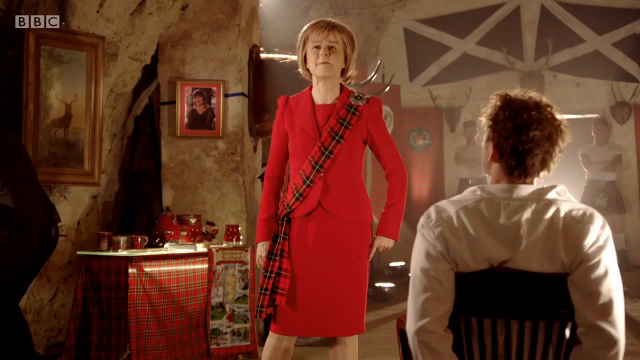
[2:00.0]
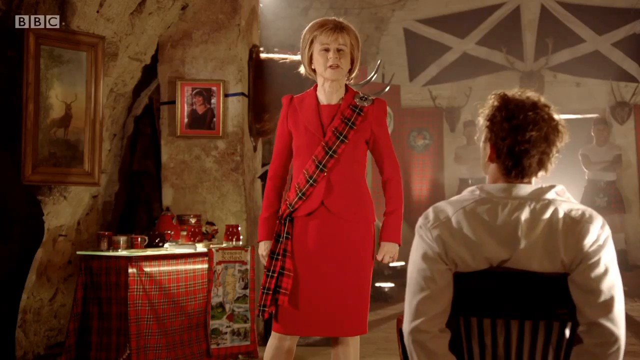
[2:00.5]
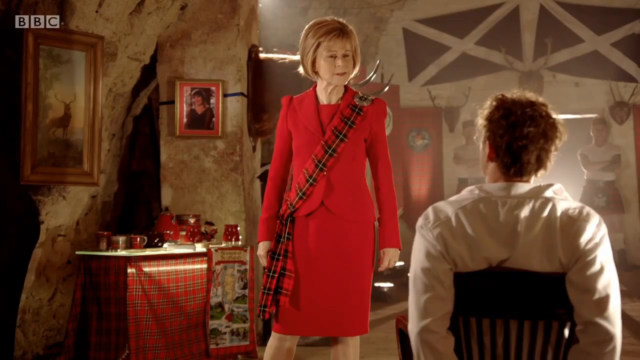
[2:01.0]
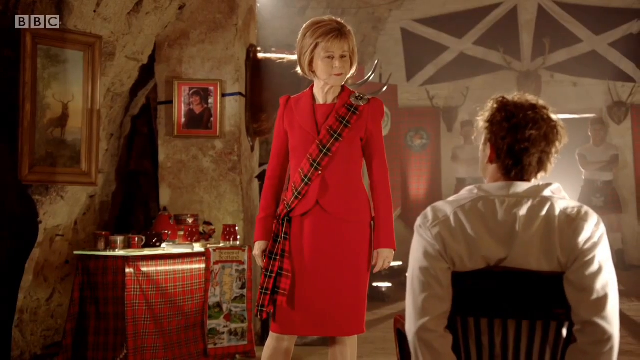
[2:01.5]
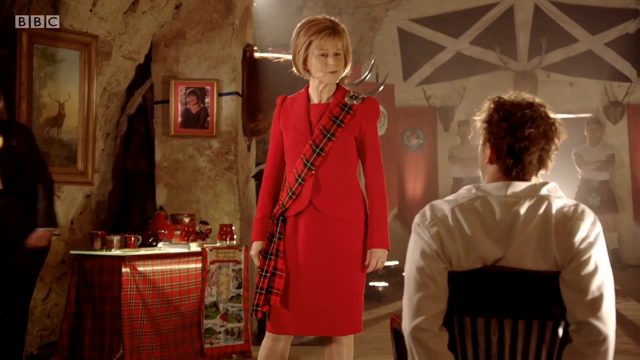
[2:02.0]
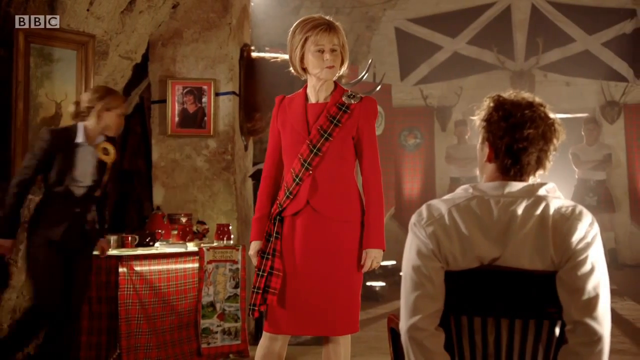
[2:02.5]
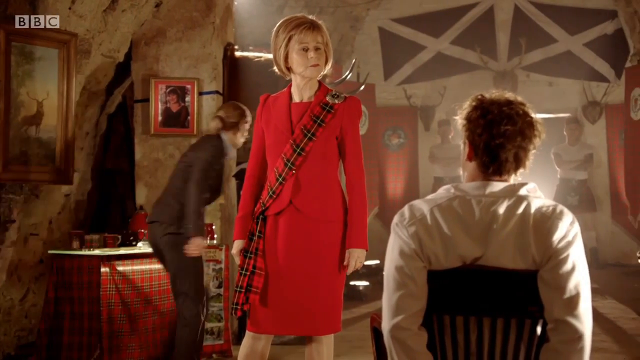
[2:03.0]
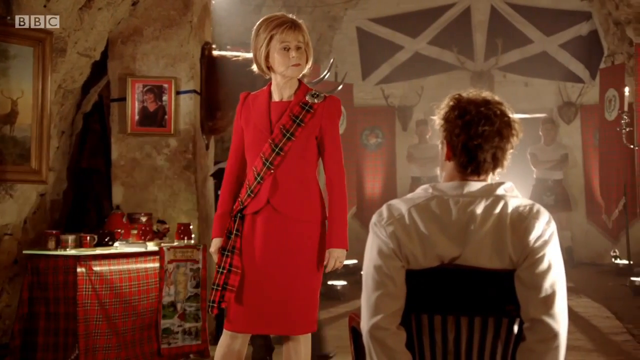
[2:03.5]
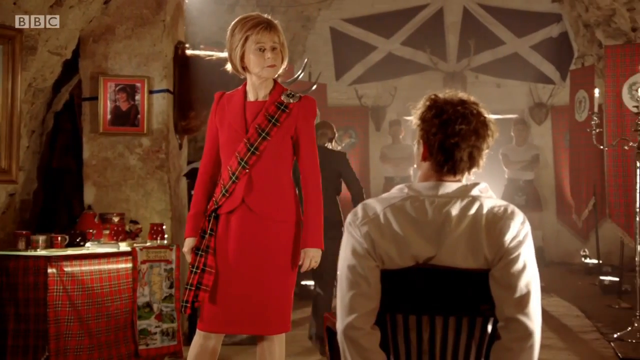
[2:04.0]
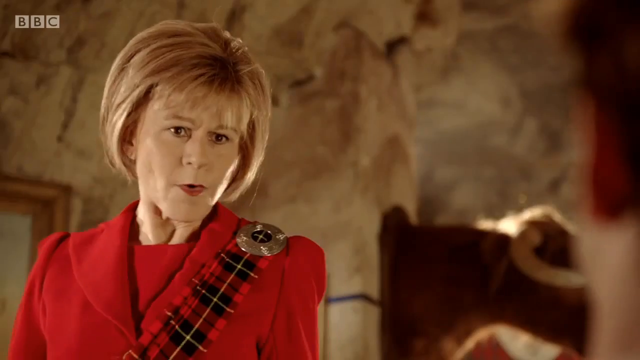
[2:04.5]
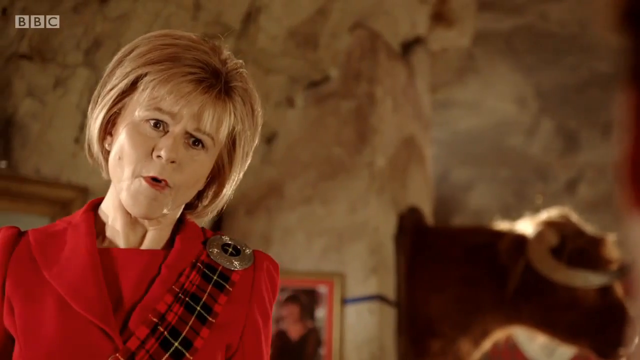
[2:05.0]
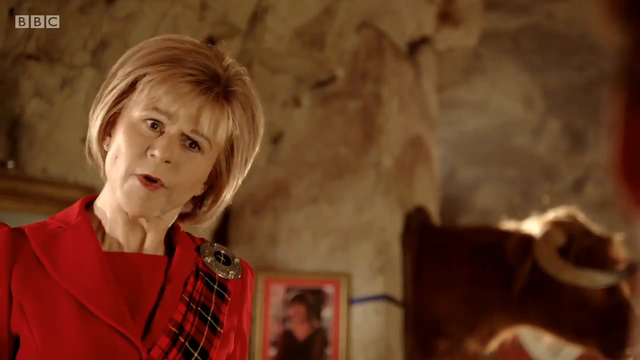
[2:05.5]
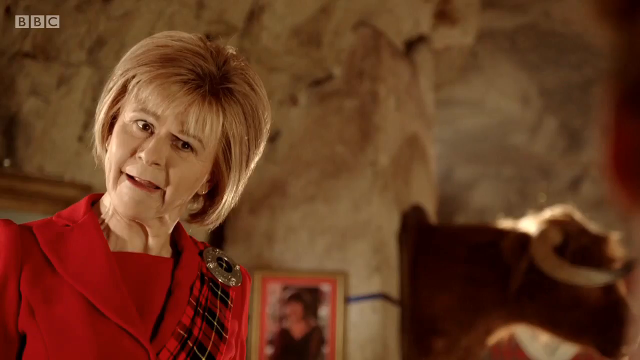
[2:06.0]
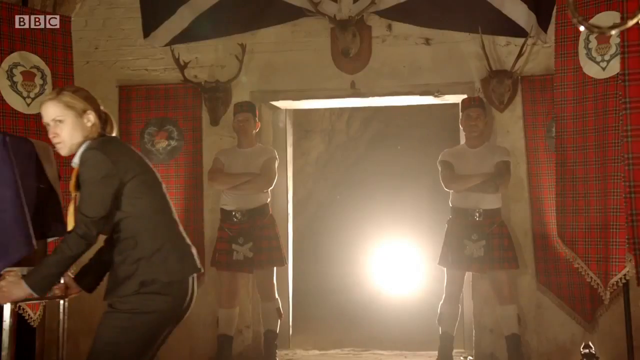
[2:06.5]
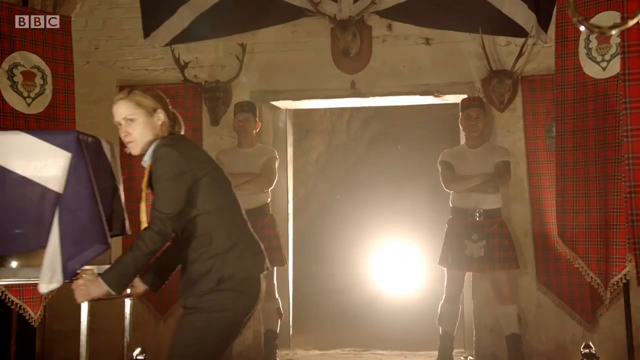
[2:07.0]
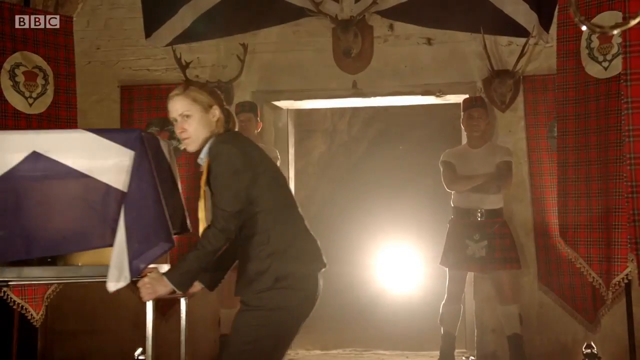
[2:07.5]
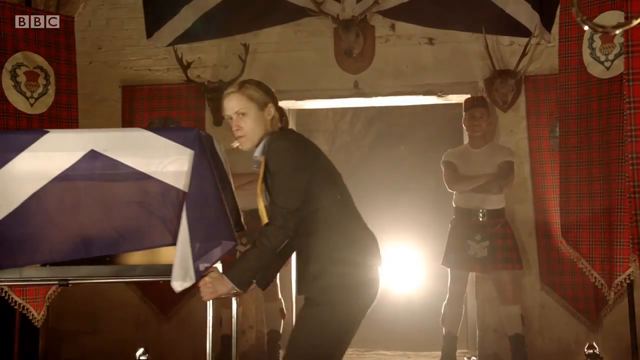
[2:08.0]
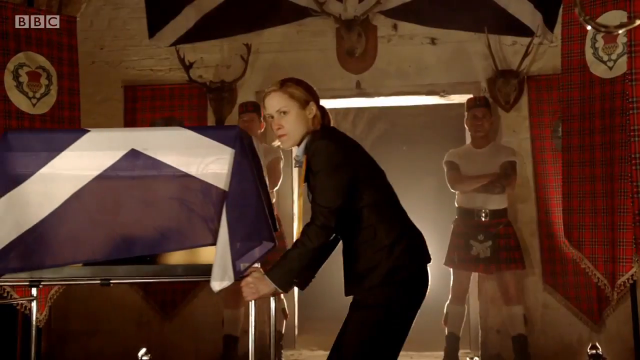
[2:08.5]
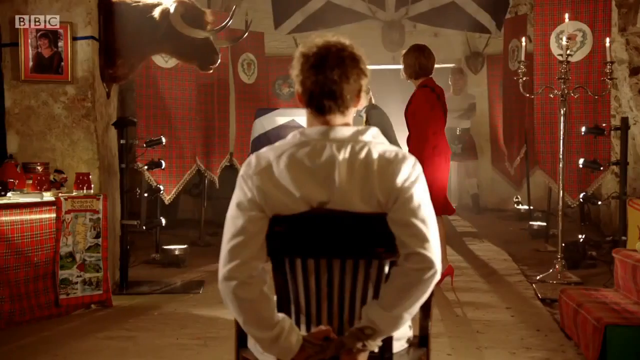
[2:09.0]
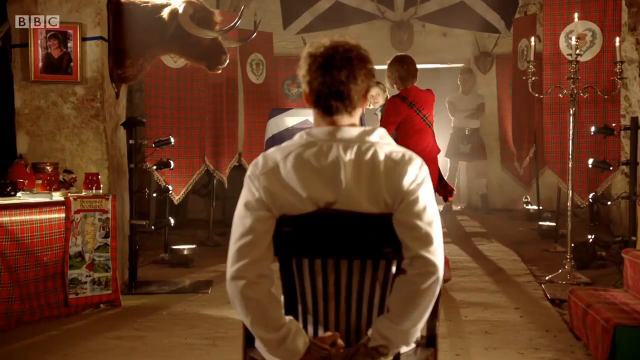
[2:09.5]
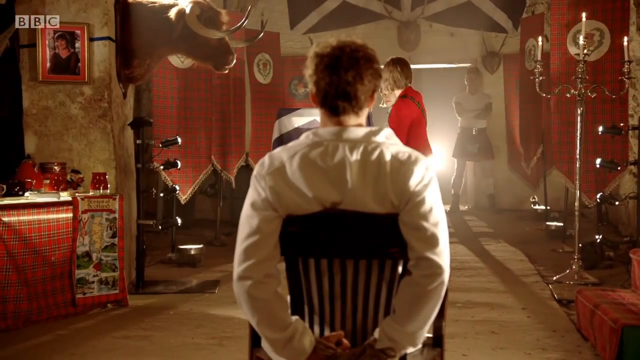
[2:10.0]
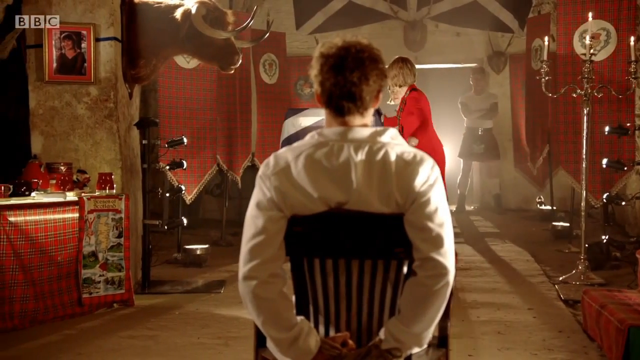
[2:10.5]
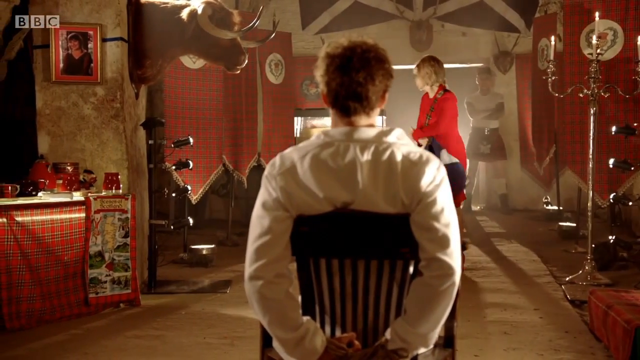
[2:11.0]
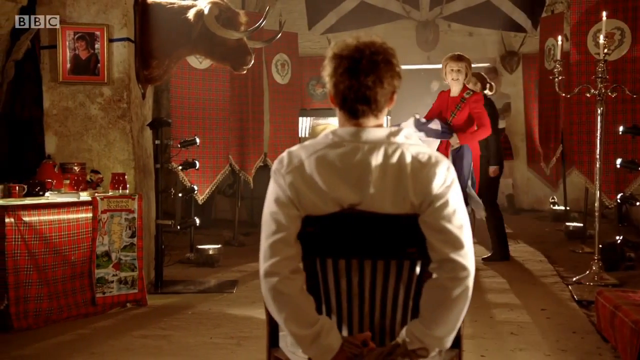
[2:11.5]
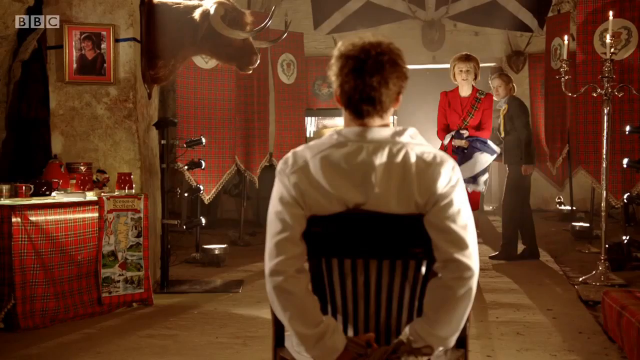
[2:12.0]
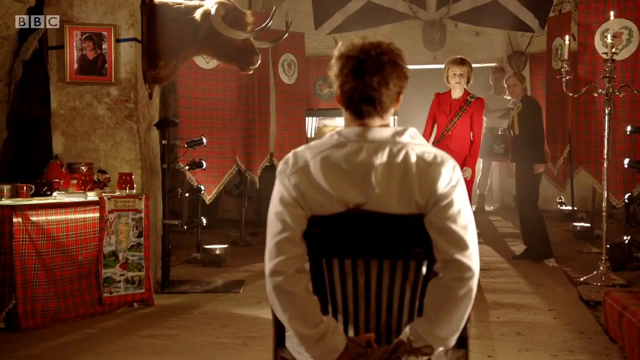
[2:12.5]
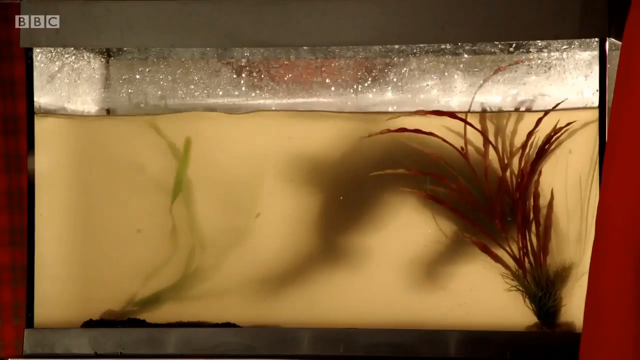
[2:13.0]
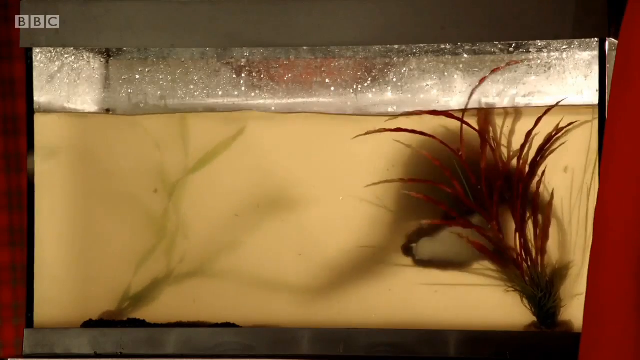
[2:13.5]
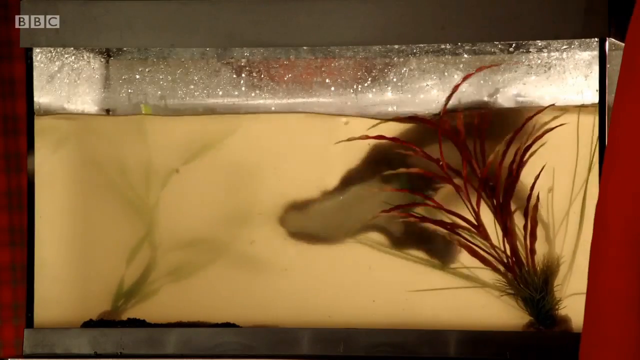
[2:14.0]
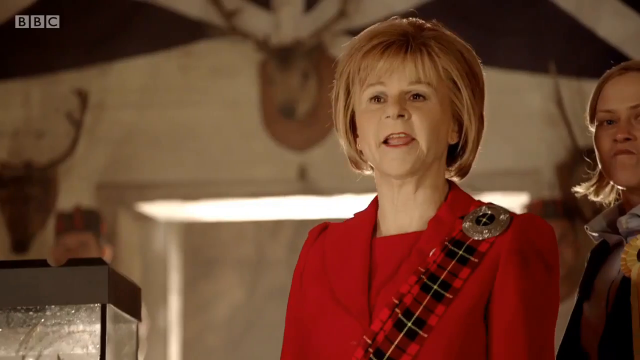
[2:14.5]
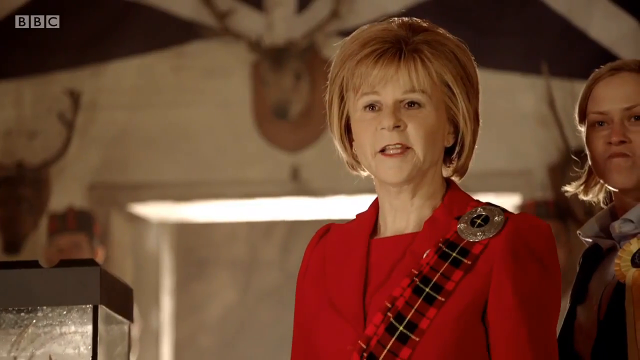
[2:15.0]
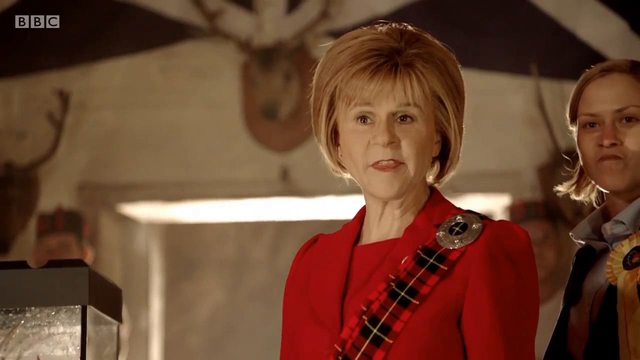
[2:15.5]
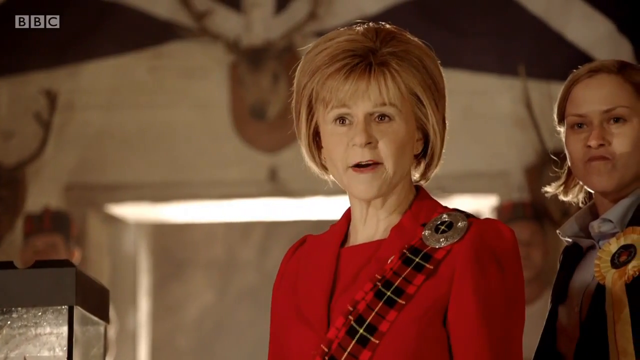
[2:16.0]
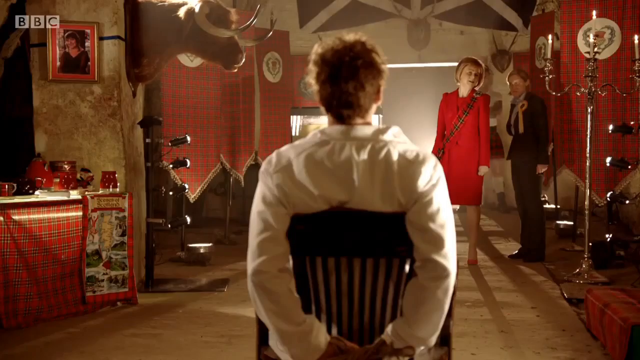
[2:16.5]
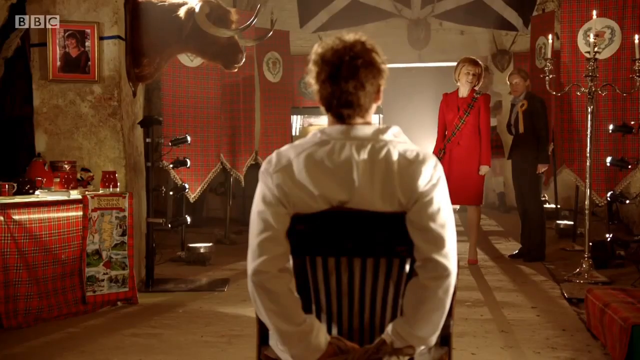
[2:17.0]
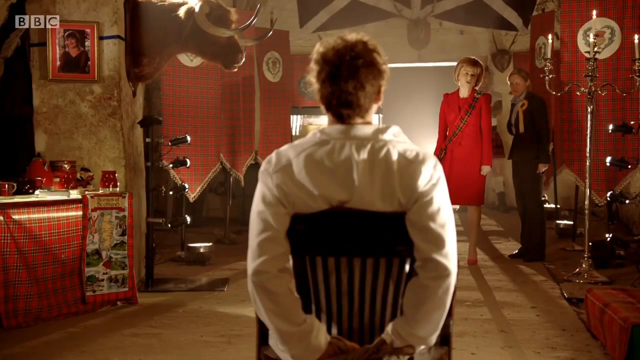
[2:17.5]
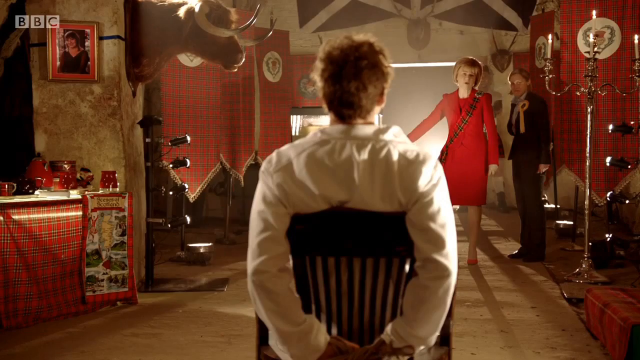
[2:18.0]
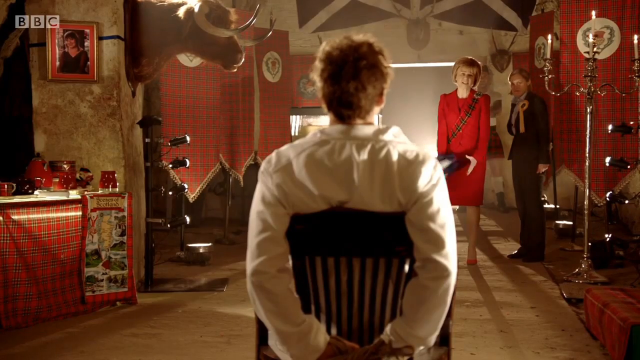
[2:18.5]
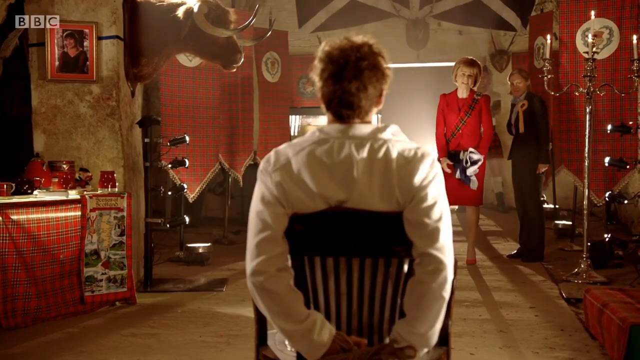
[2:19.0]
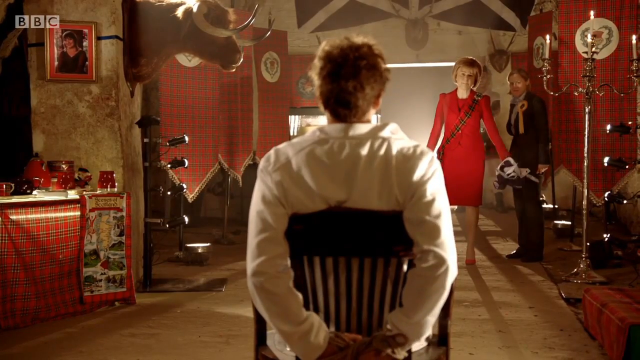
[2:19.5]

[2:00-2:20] A shot includes three people. At the far left is a woman in dark clothes and a light shirt, with a yellow bow on her jacket. In the center is a woman in a red dress with a black and red striped belt. At the far right is a man in a white shirt, who stands still for a few seconds. The woman in the dark jacket moves a box covered by a blue and white flag. The woman in the red jacket removes the flag from the box and then stands still for a moment in front of the man. Underneath the flag is revealed a kind of aquarium with a strange creature swimming in dirty, turbid water, along with plants and green and red algae.